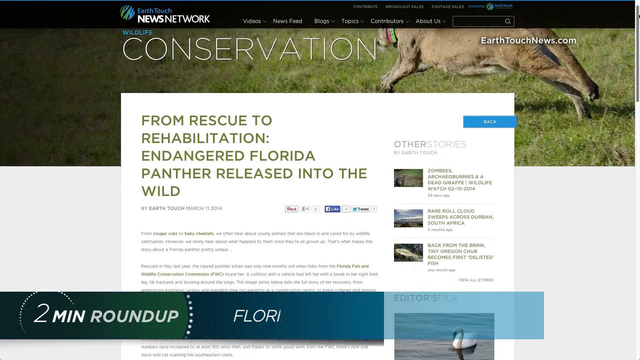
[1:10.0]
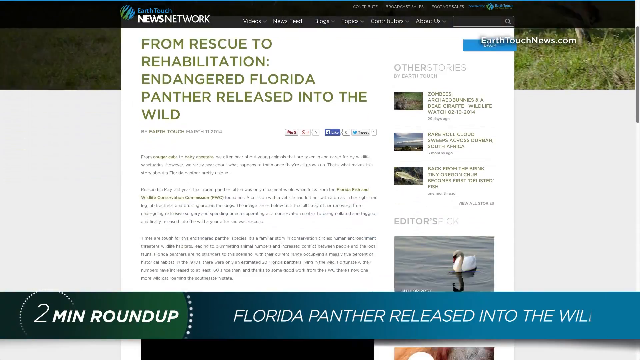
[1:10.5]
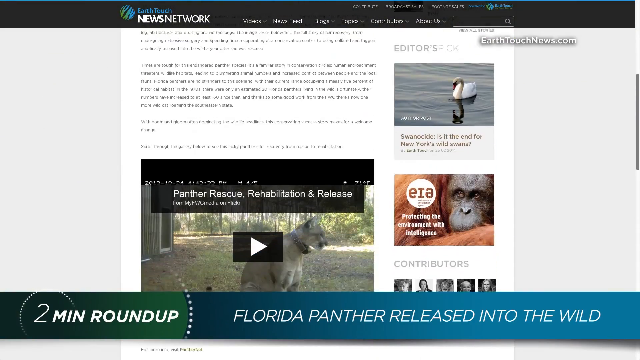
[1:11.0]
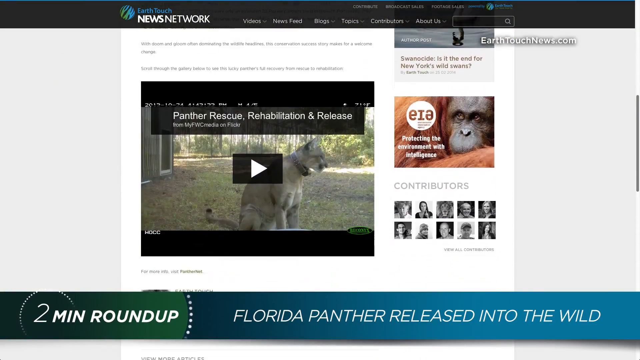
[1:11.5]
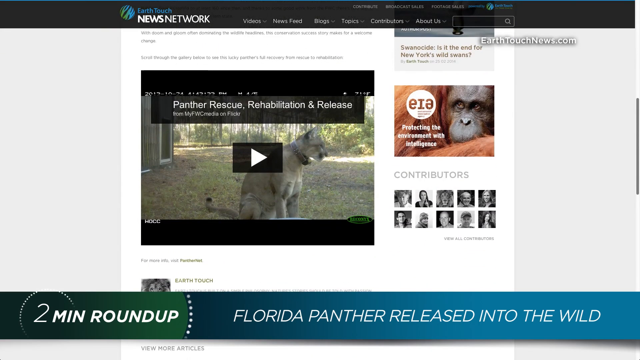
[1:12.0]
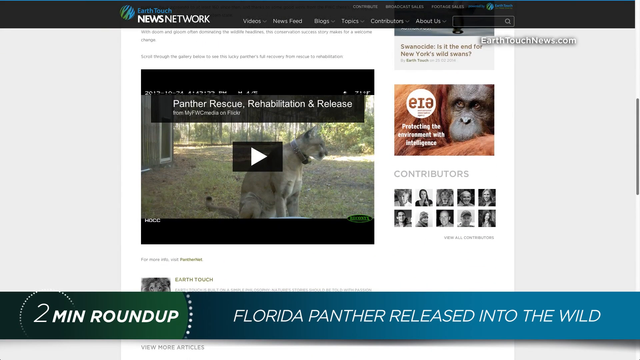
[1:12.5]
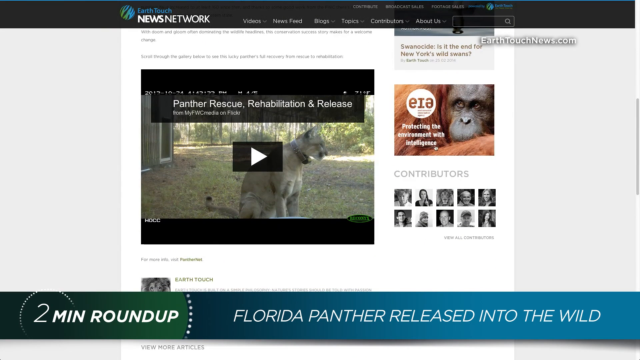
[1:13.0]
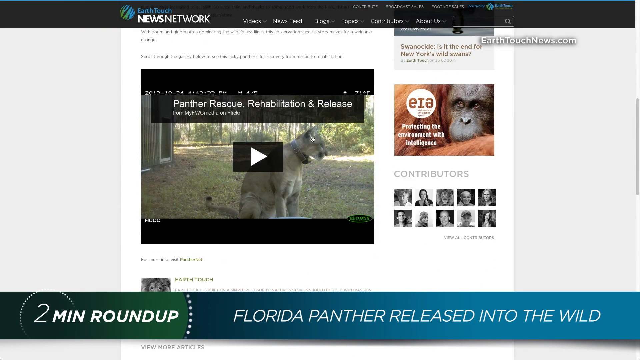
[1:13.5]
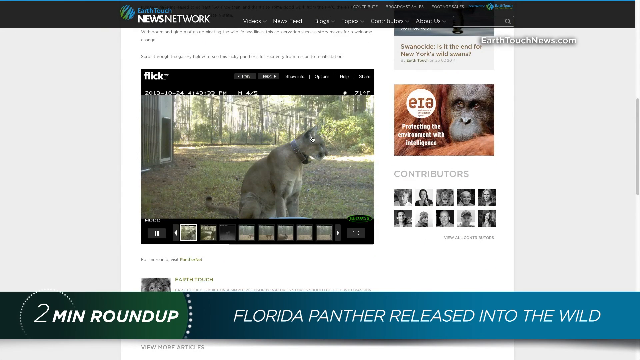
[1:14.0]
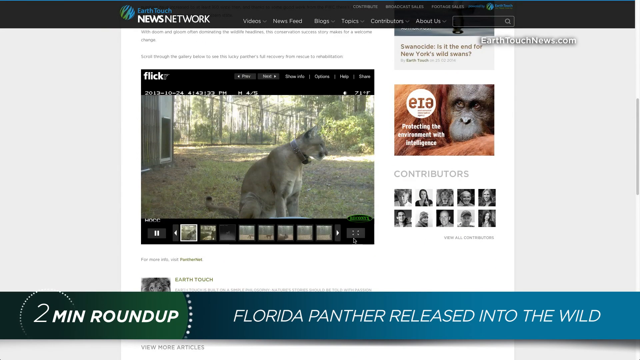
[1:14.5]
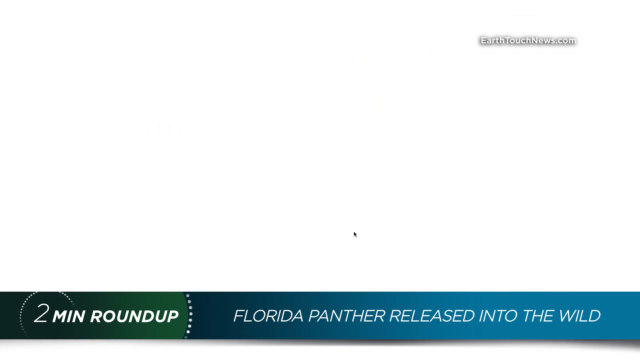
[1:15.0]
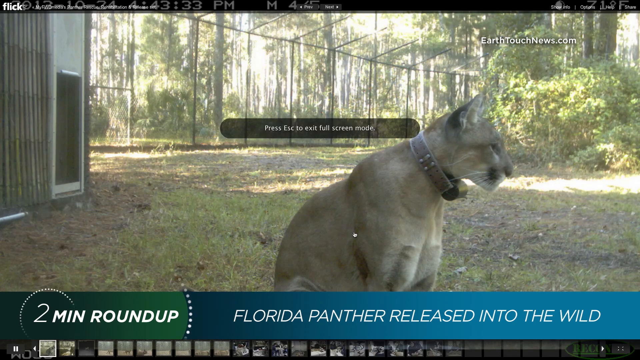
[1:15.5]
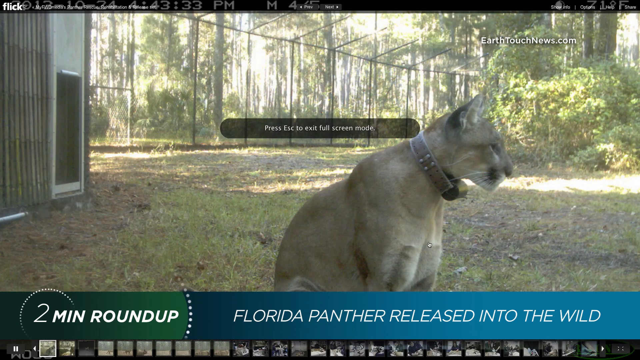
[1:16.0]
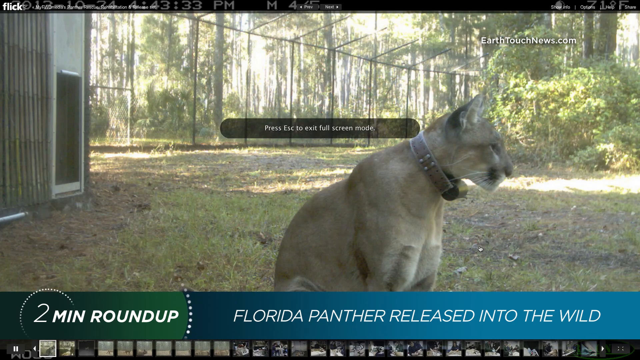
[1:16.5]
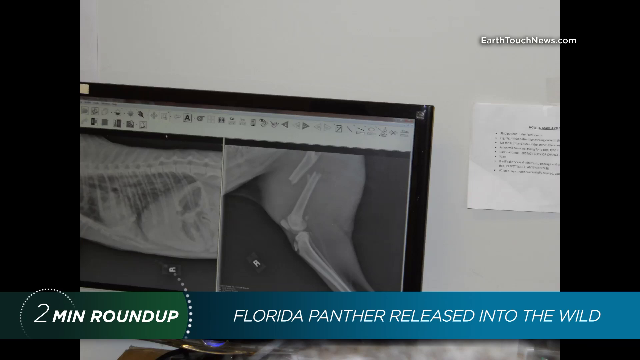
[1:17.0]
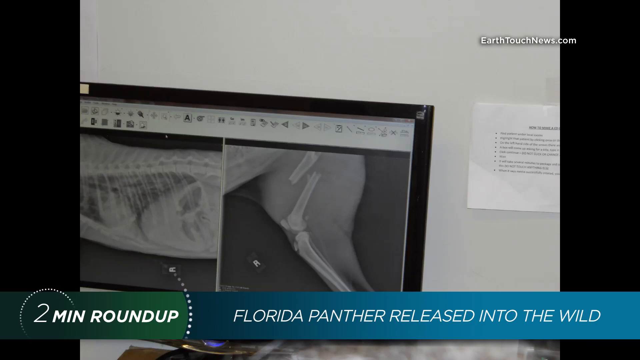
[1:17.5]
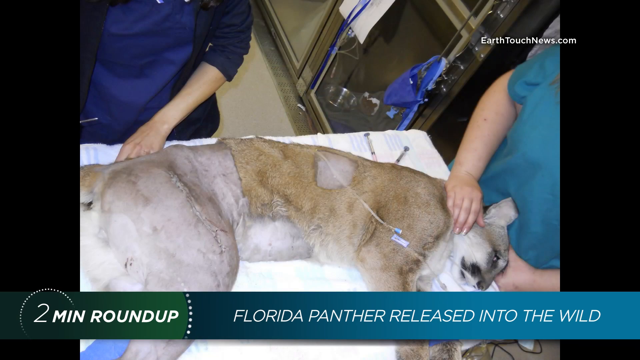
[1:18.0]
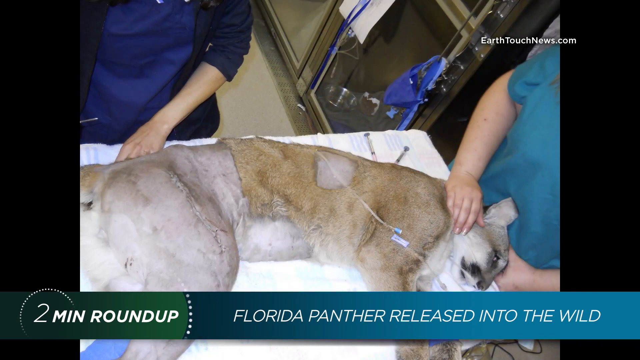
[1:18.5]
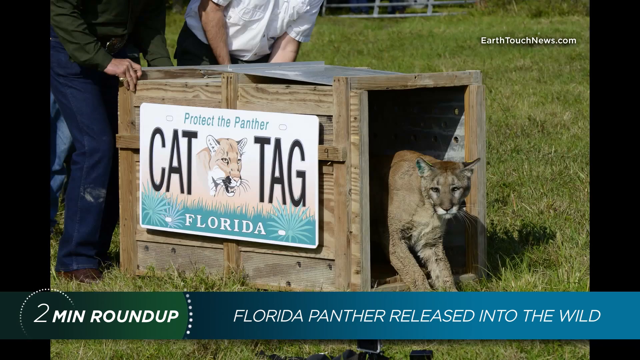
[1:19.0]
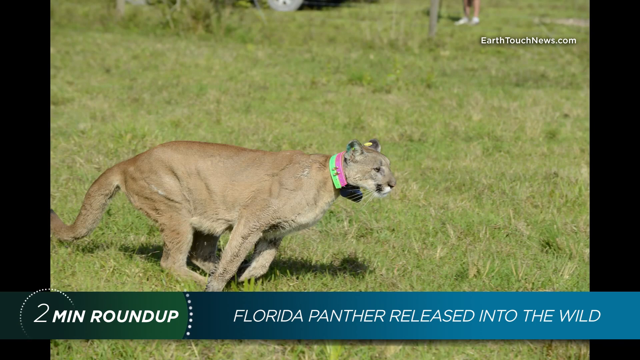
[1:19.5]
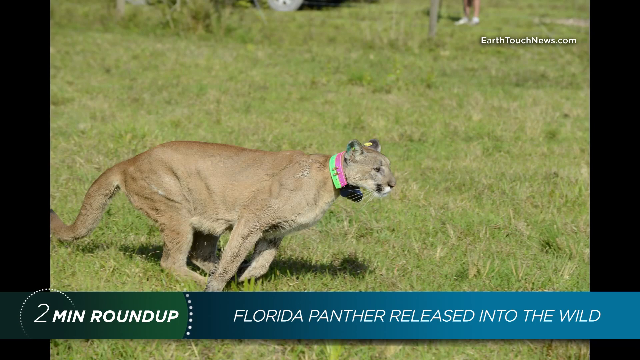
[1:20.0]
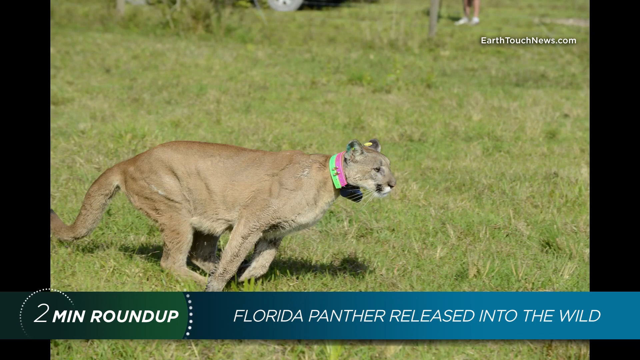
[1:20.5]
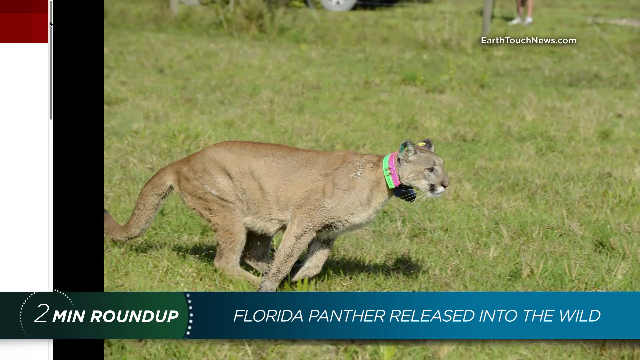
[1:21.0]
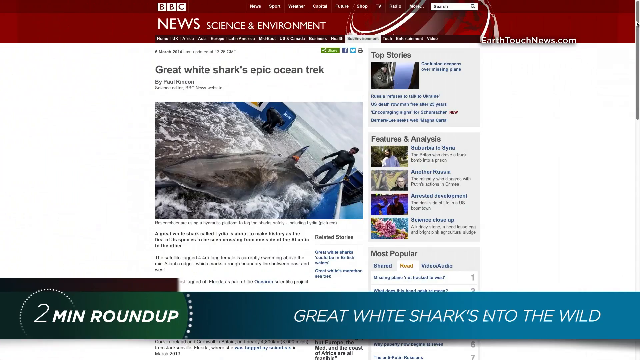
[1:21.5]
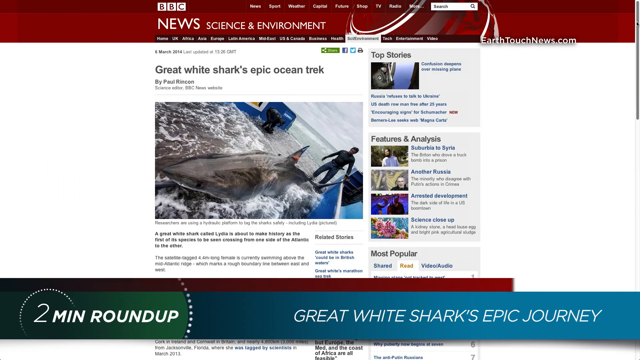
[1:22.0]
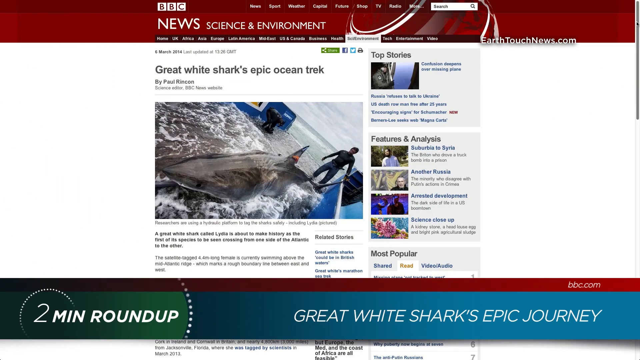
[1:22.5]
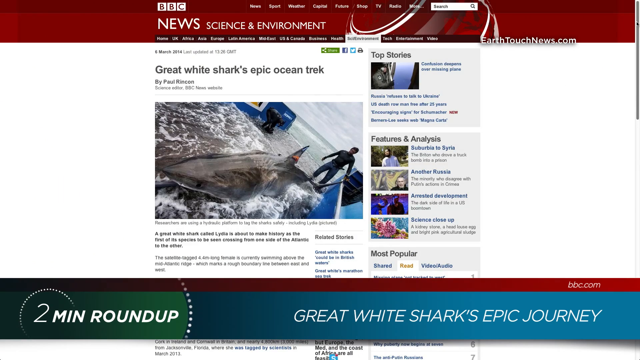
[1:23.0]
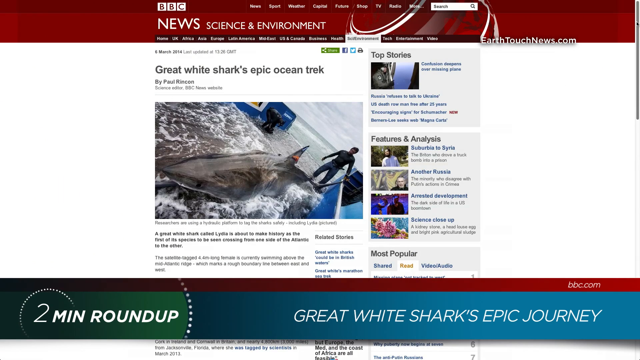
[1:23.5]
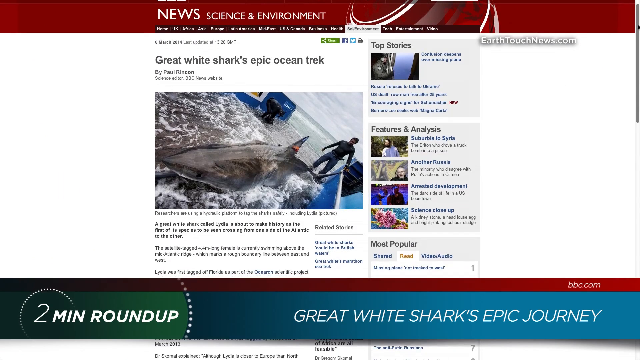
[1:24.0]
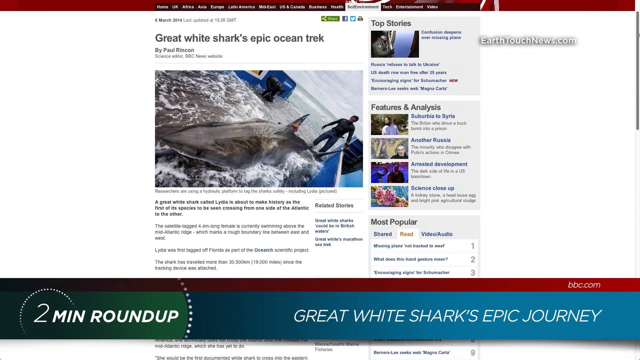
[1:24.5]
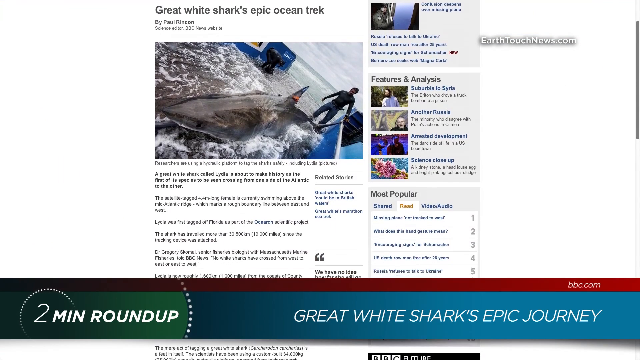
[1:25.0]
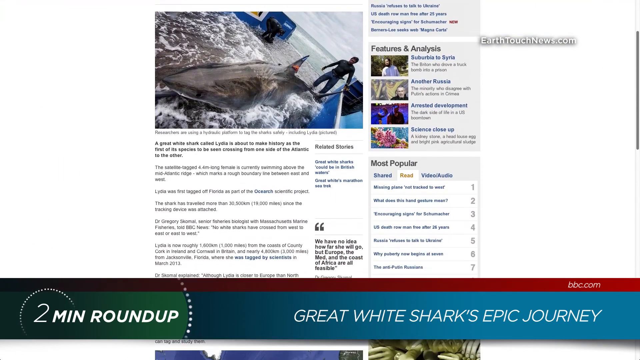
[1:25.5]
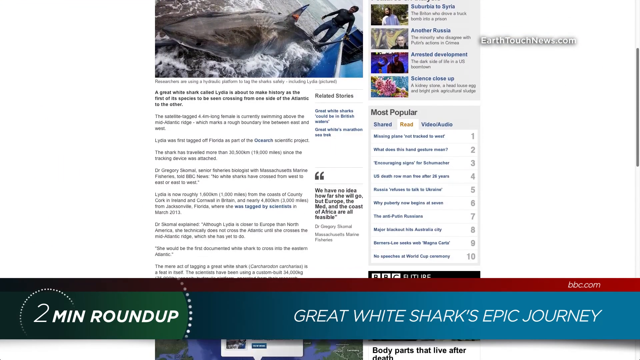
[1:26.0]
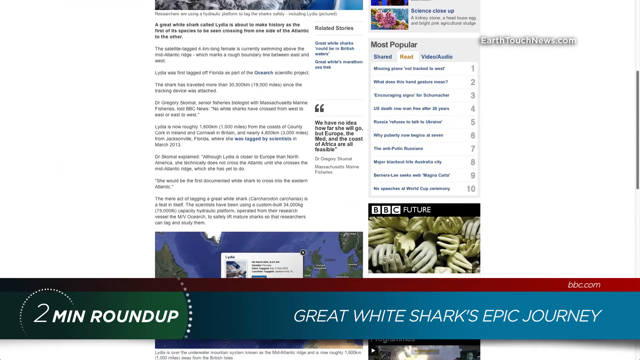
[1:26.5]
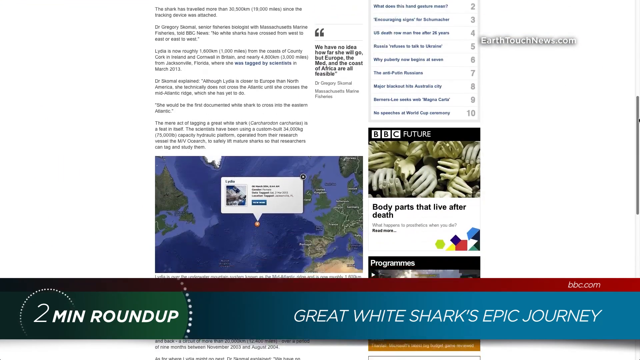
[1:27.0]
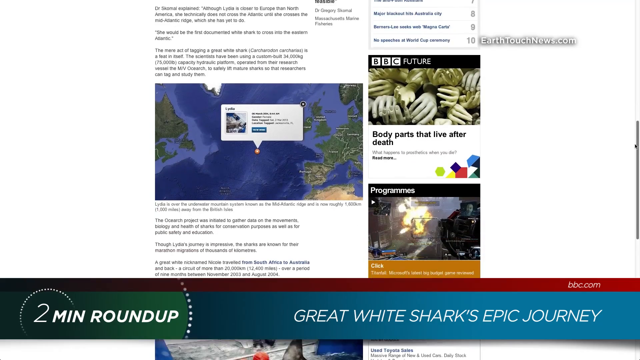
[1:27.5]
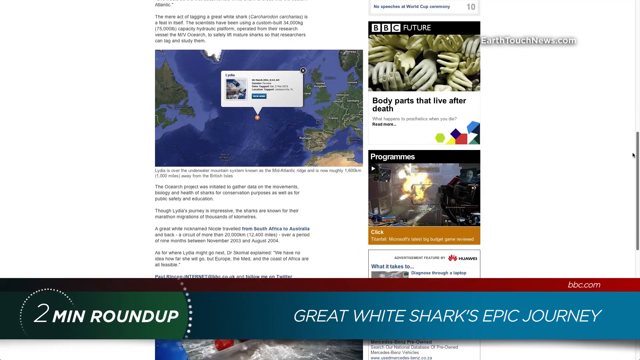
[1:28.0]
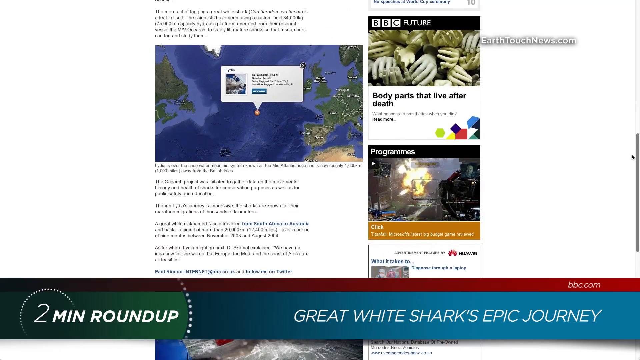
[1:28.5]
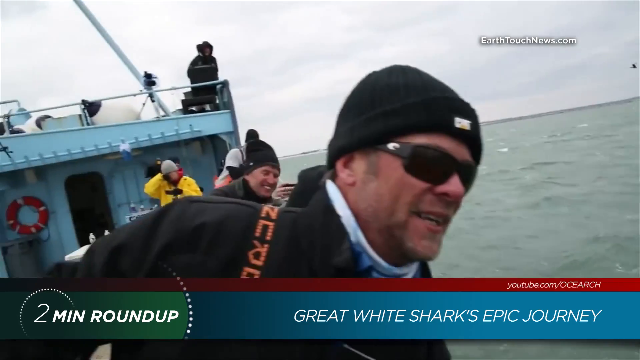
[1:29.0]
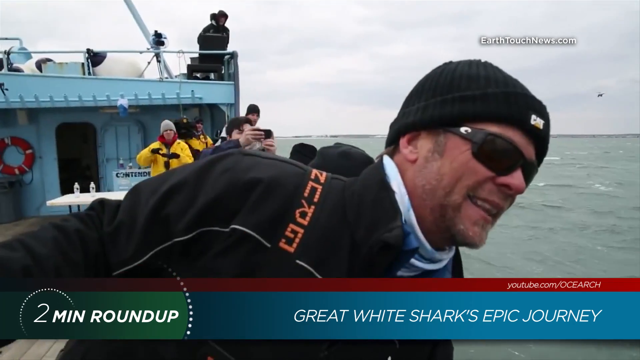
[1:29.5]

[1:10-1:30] A web page for EarthTouch News Network reads "Wildlife conservation" at the top, with an article titled "From rescue to rehabilitation, endangered Florida panther released into the wild". At the bottom it says "Two-minute roundup, Florida panther released into the wild". A person scrolls the web page and stops on a video titled "Panther rescue rehabilitation and release". Clicking it brings up a full screen showing the animal in an enclosure in the daytime; it is wearing a collar and looking to the right. Next is an X-ray in which it looks like an animal has broken bones. Then a panther is shown lying down on a table with two people, one in blue and one in green, on either side of it; parts of its skin have been shaved. What appears to be its release follows, with the text "Protect the panther, cat tag, Florida": people let it out of a box and it runs free. Next is a BBC News page reading "Great white sharks, epic ocean trek", with a main image of a man in a wetsuit with a shark in front of him. The page is scrolled further down, showing a man on a boat wearing a dark hat, dark glasses and a dark jacket, waving.